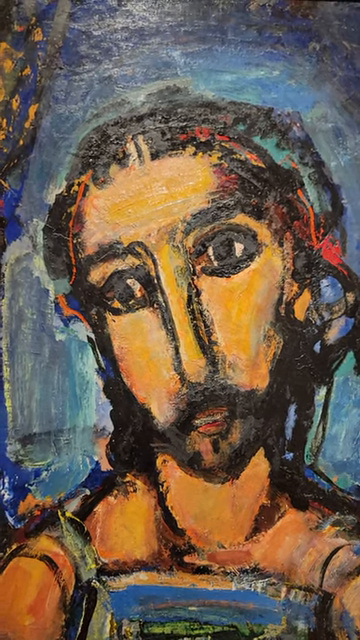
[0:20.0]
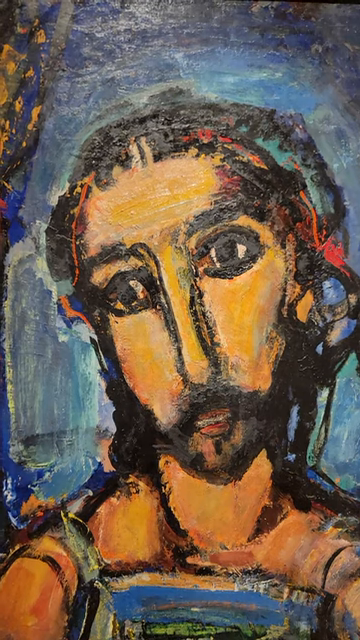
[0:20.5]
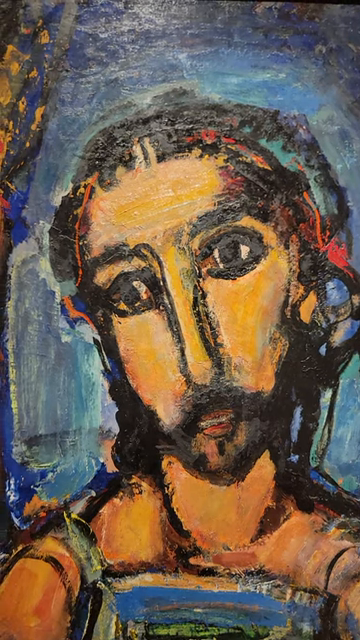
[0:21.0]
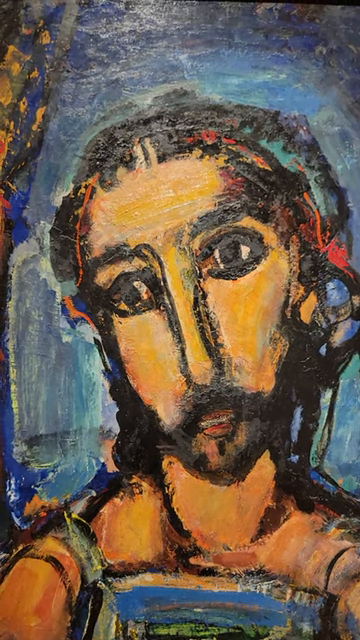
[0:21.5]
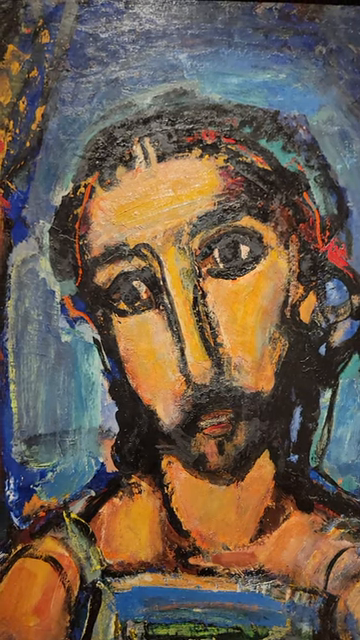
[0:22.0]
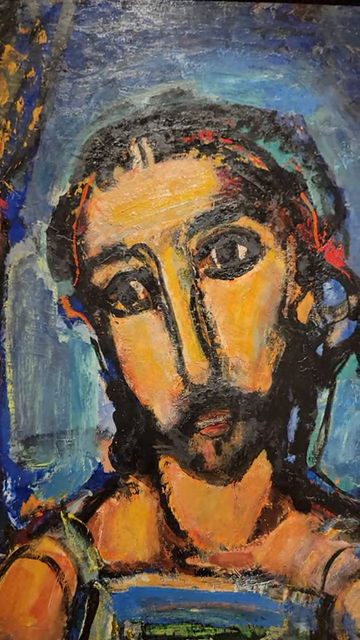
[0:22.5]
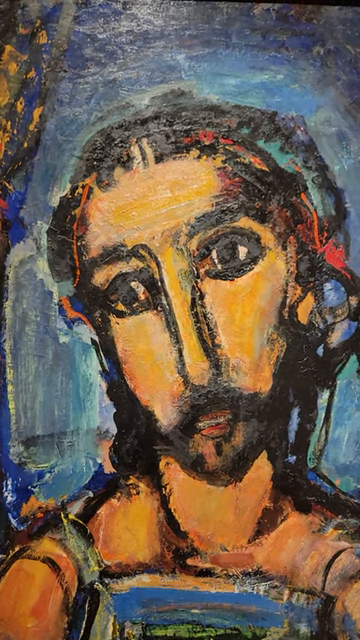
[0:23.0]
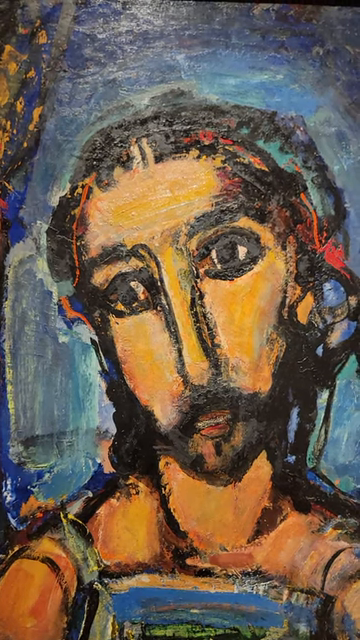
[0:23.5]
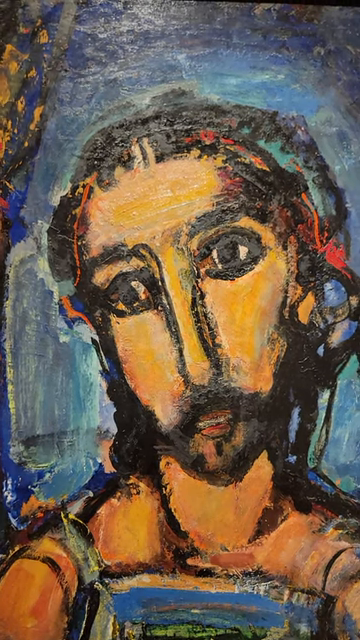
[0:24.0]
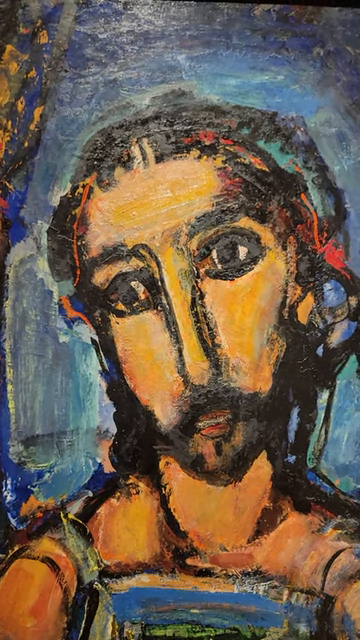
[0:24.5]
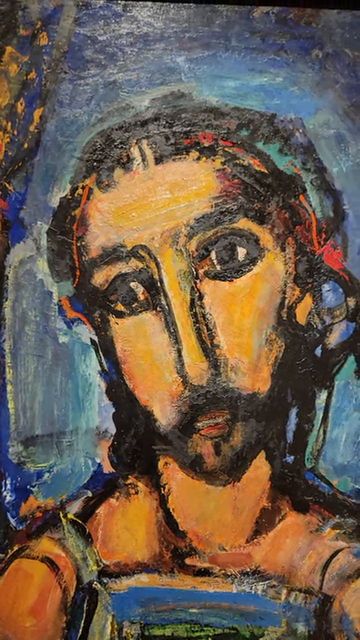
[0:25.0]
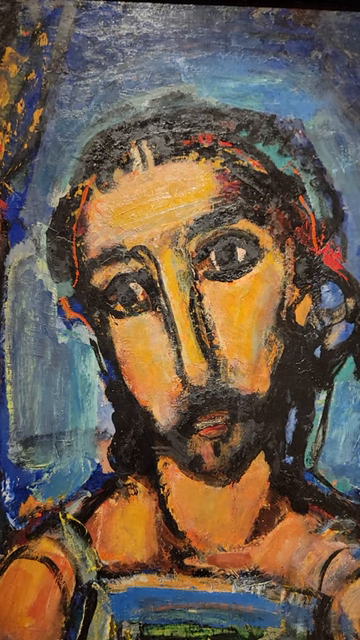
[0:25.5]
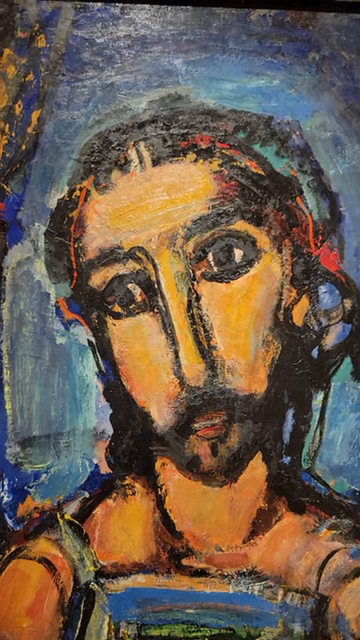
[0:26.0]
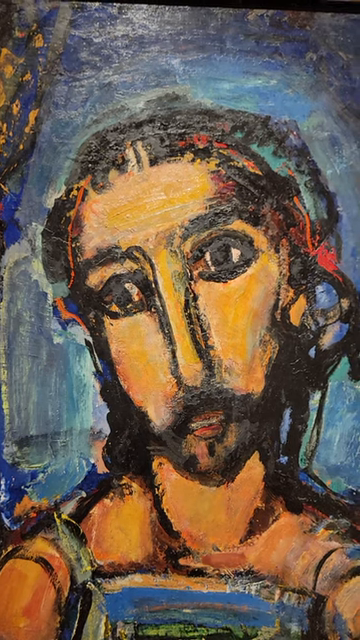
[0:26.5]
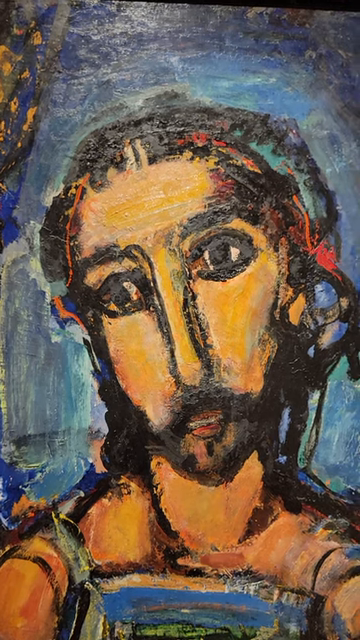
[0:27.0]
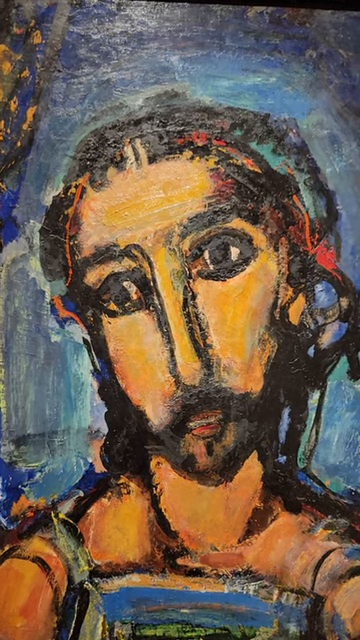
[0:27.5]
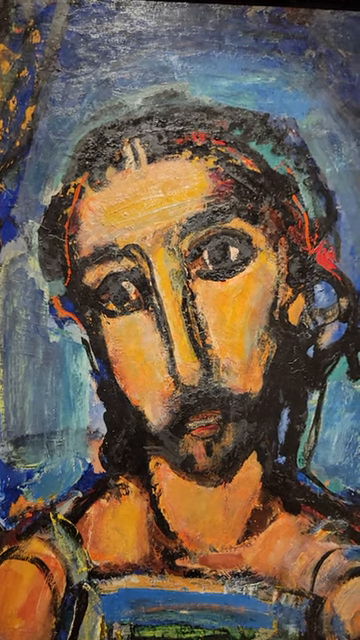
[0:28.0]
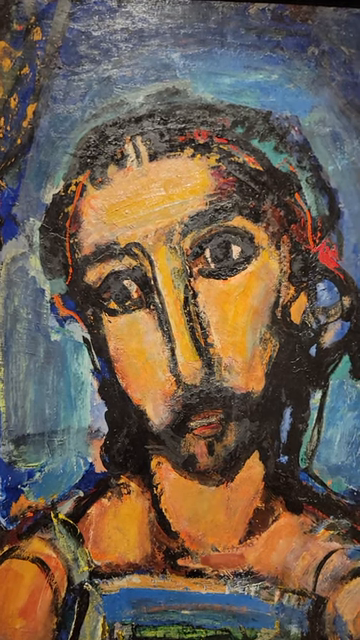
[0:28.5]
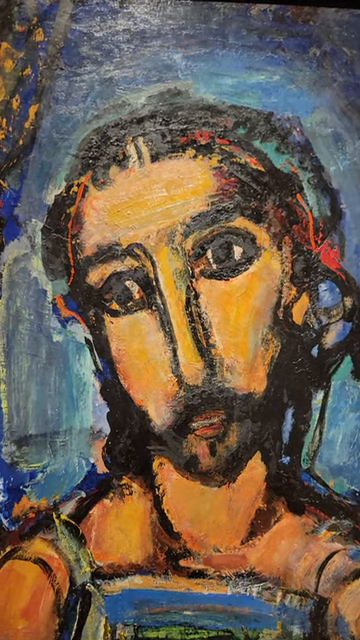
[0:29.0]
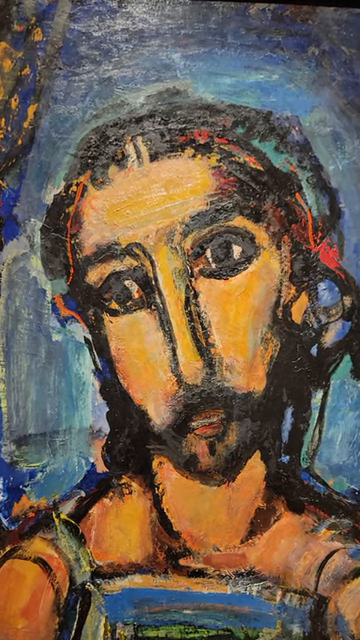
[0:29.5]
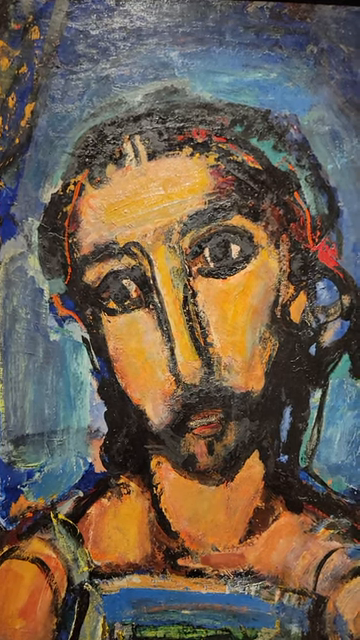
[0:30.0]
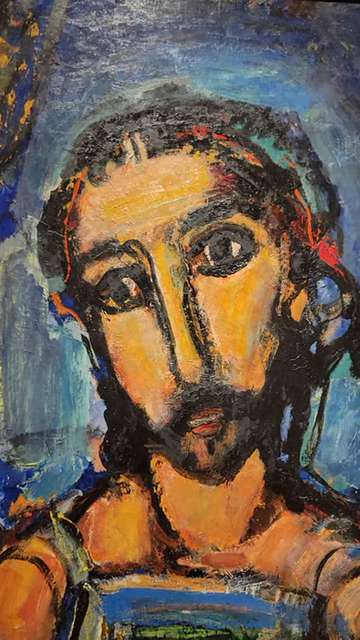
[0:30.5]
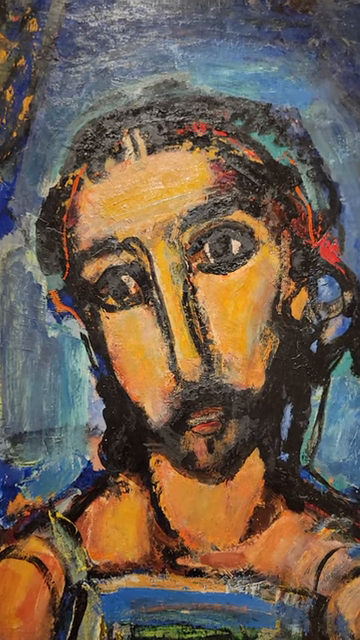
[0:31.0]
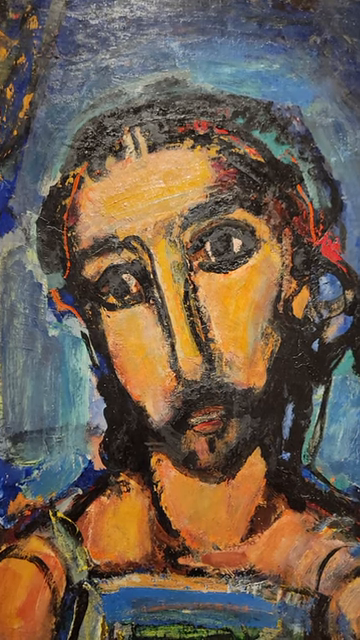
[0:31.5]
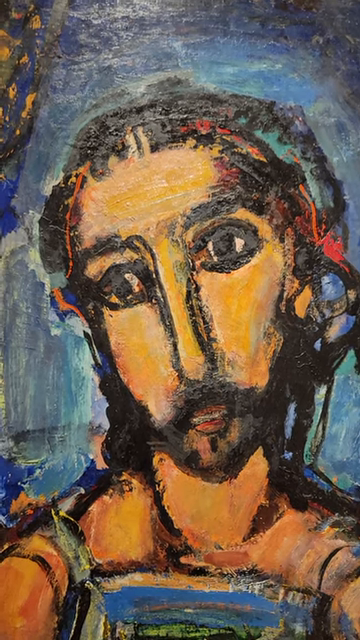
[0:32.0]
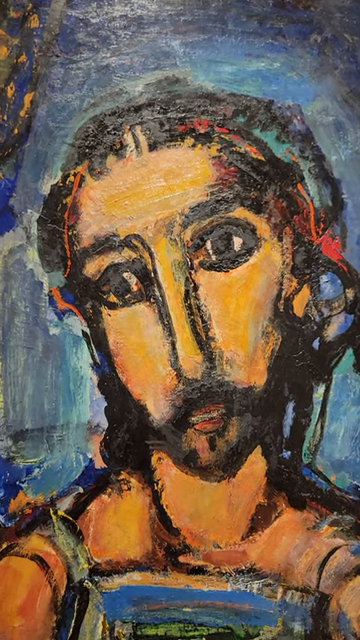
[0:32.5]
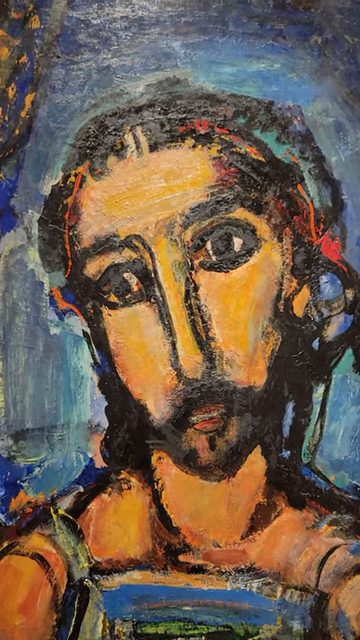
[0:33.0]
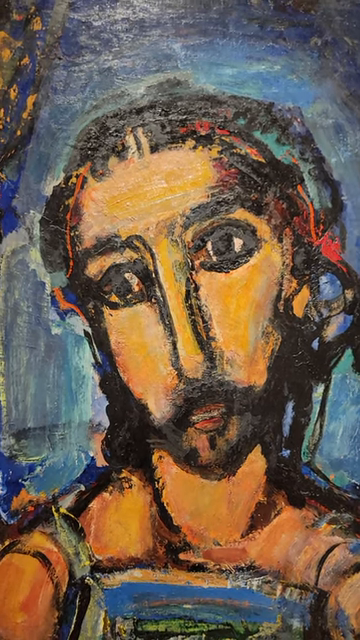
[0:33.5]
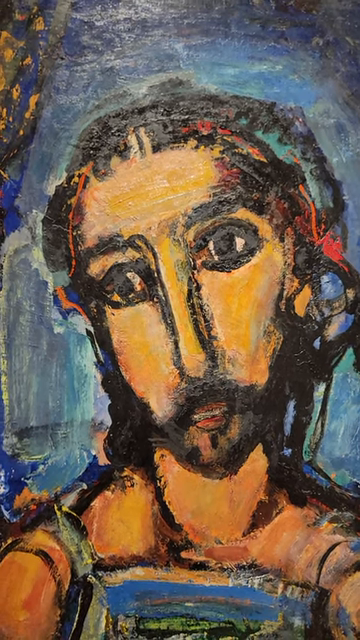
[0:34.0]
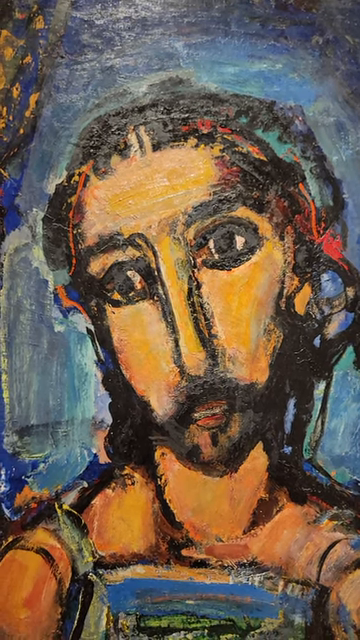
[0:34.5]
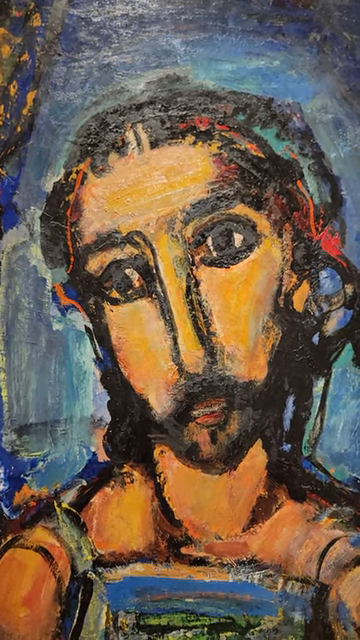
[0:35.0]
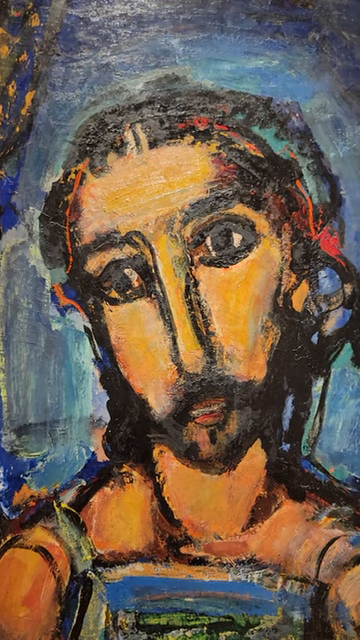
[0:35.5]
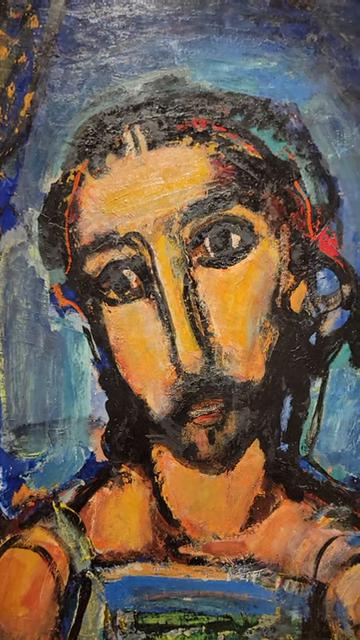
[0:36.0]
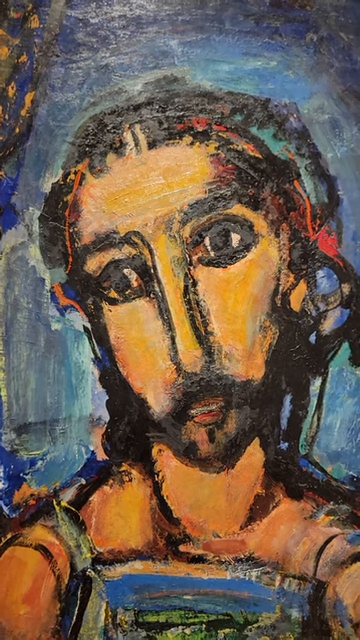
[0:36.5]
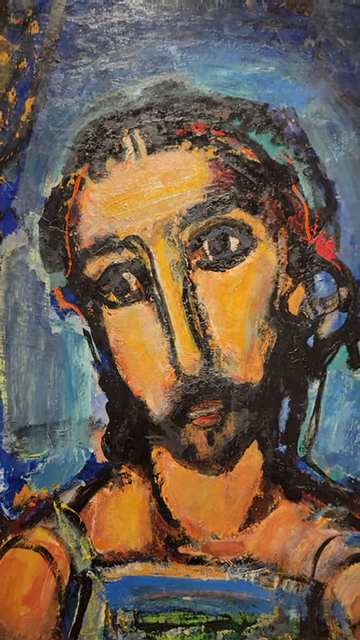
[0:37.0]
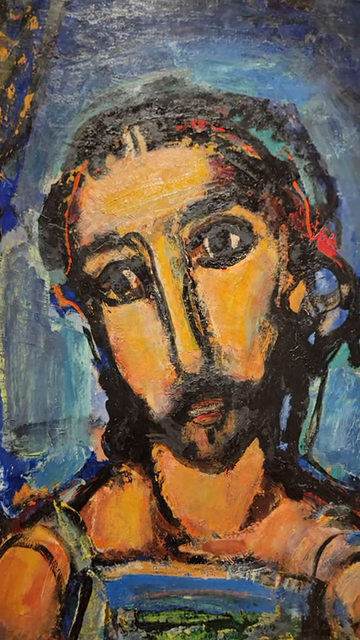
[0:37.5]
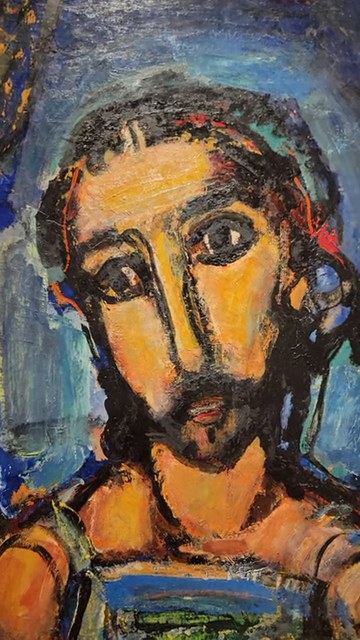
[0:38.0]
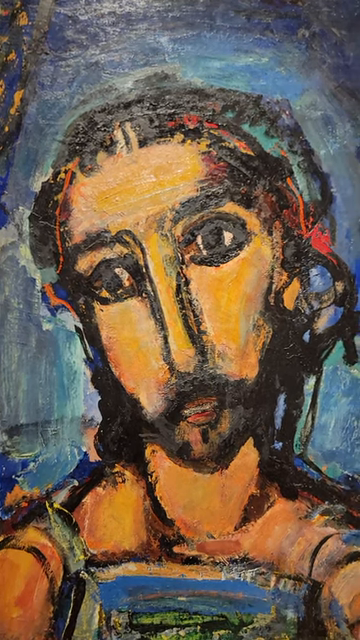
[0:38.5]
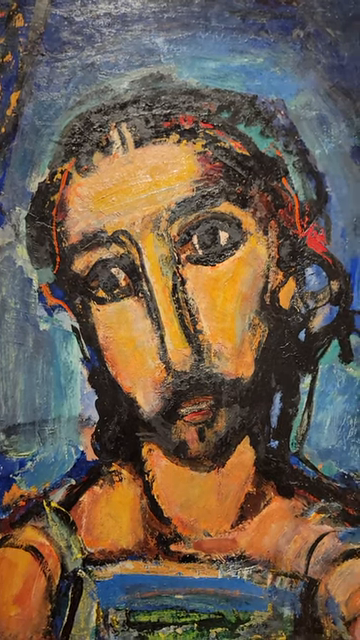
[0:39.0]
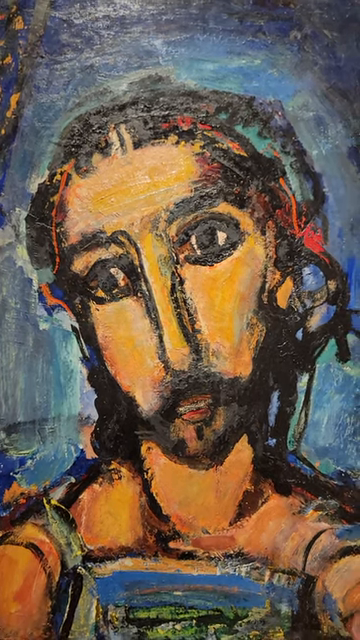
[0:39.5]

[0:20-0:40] The shot stays on a close-up of a picture of what appears to be a more modern take on Jesus. The background is mostly dark blue mixed with lighter blue colors. The head of this modern-day Jesus takes up the majority of the painting and is in the center. He has a black beard and long black dreadlocks mixed with red dreadlocks, and just the top of his shoulders is visible. At the beginning, multiple very faint white lights go across the video, which might come from the camera being used. The figure looks slightly to the right from its own perspective, not directly at the viewer. At the bottom of the painting, a section of blue lies beneath the neck, where the chest would appear if it could be seen.